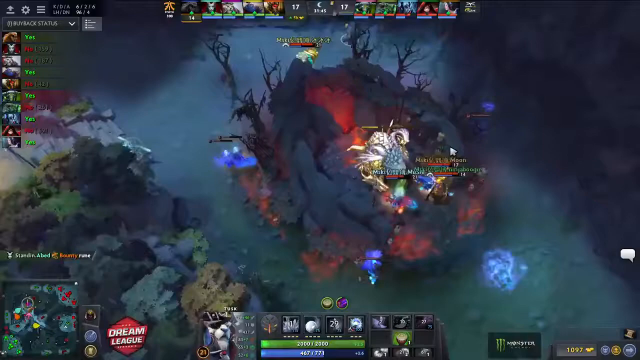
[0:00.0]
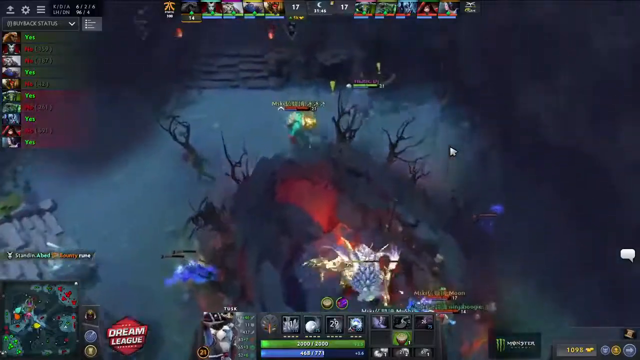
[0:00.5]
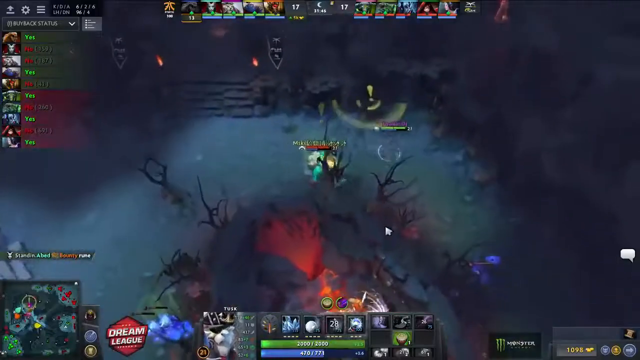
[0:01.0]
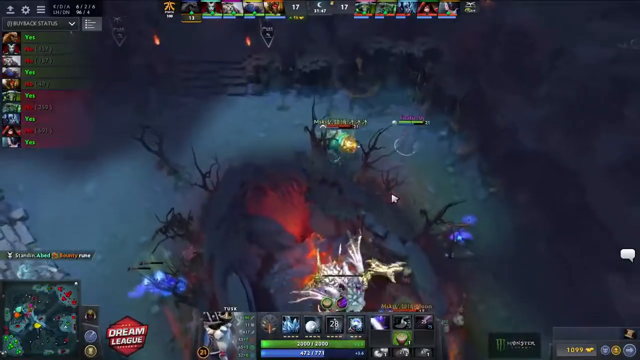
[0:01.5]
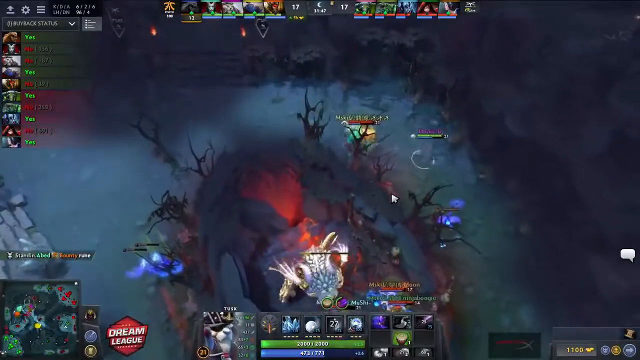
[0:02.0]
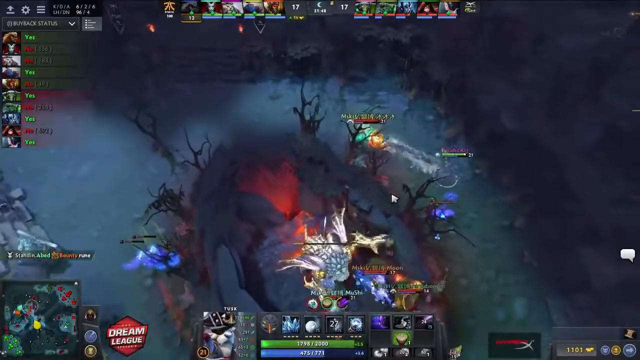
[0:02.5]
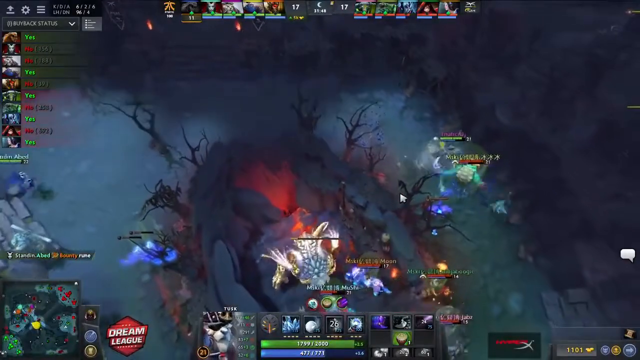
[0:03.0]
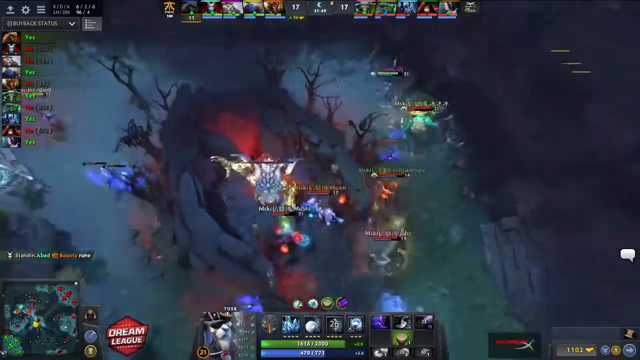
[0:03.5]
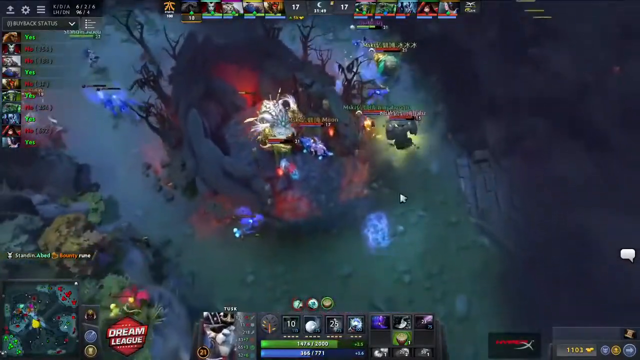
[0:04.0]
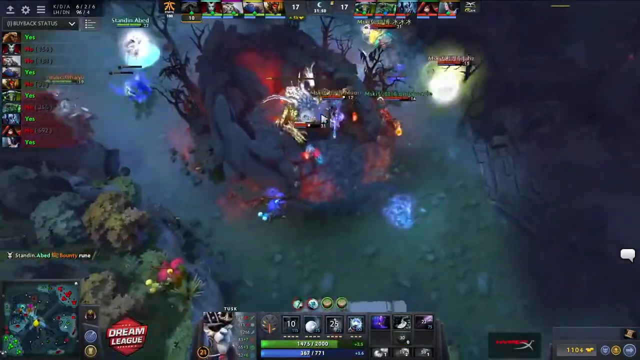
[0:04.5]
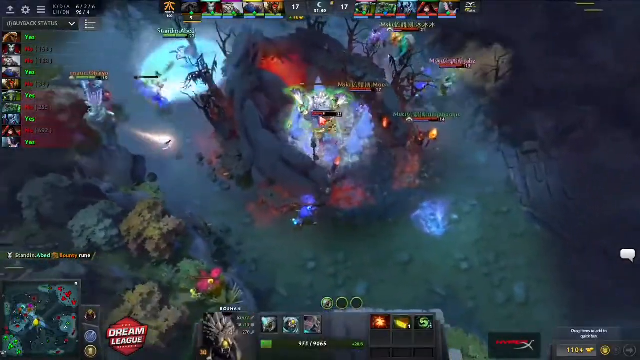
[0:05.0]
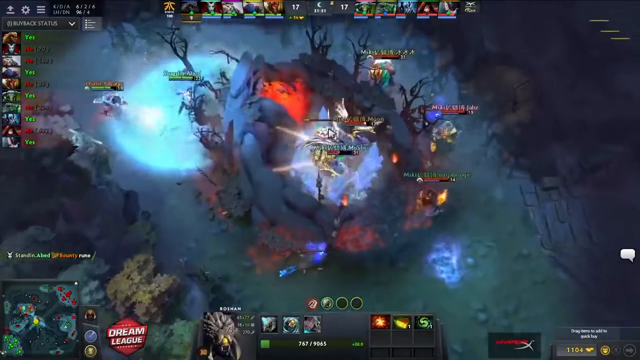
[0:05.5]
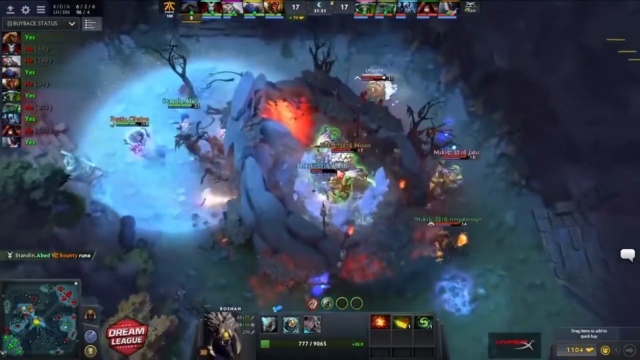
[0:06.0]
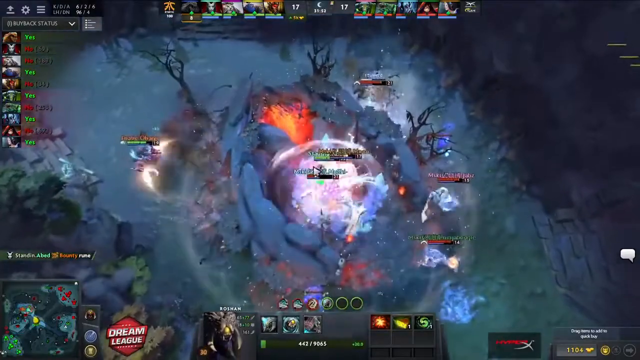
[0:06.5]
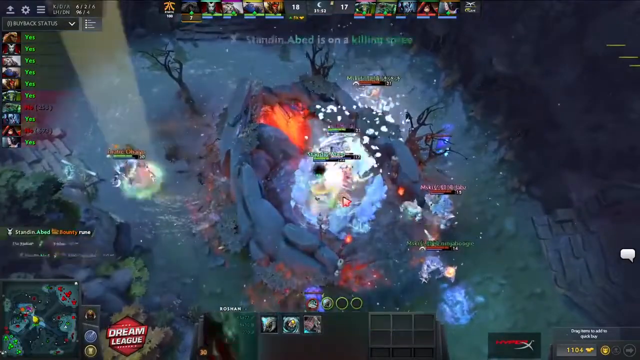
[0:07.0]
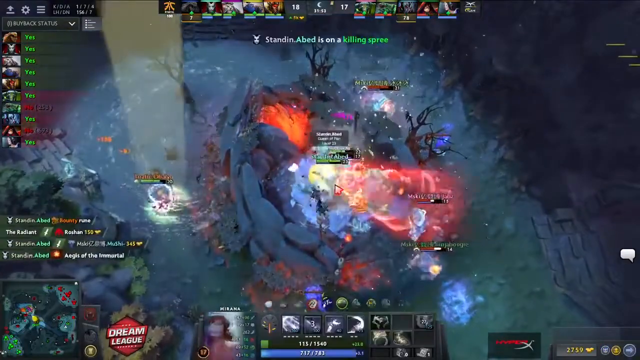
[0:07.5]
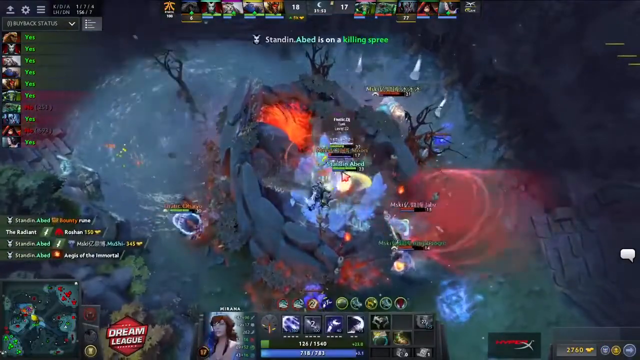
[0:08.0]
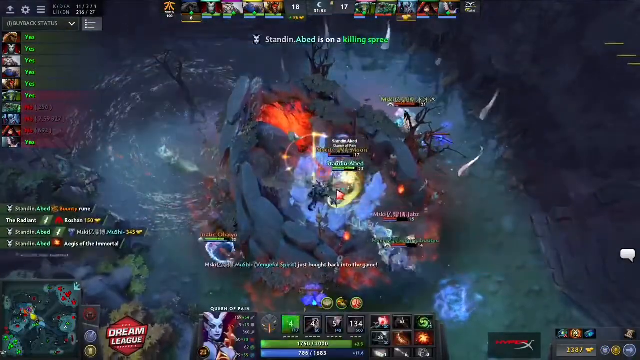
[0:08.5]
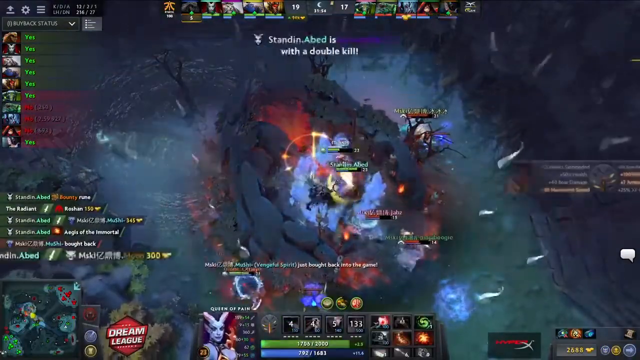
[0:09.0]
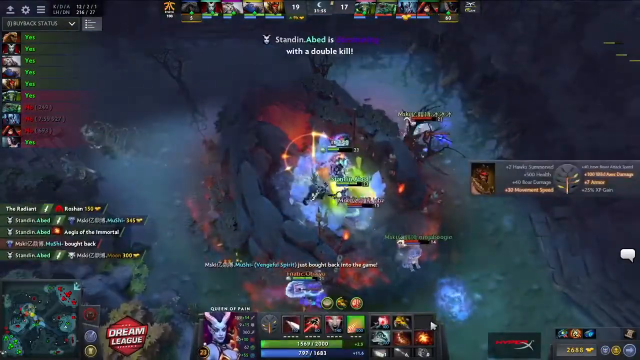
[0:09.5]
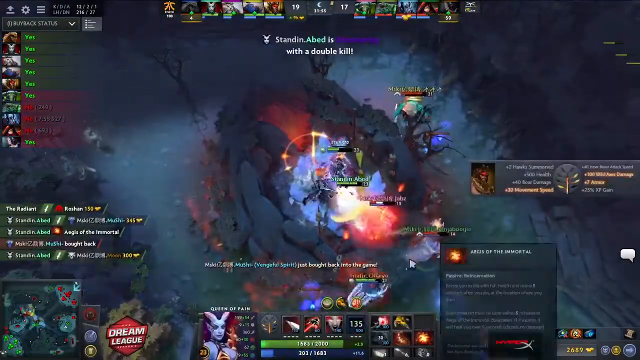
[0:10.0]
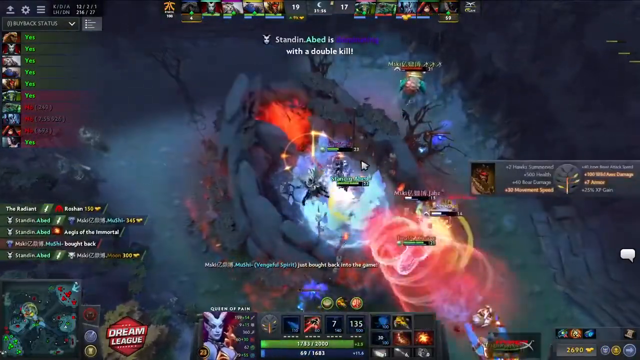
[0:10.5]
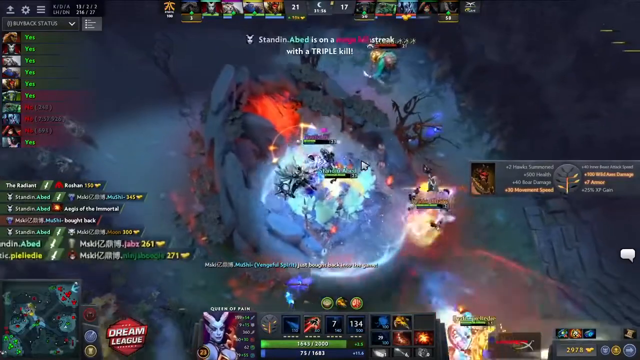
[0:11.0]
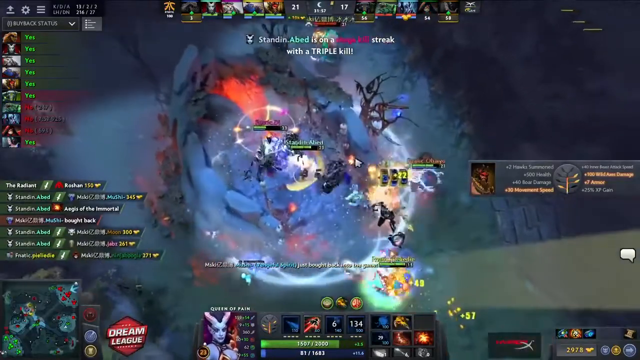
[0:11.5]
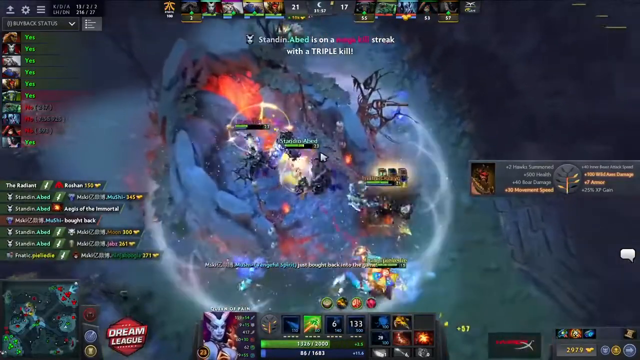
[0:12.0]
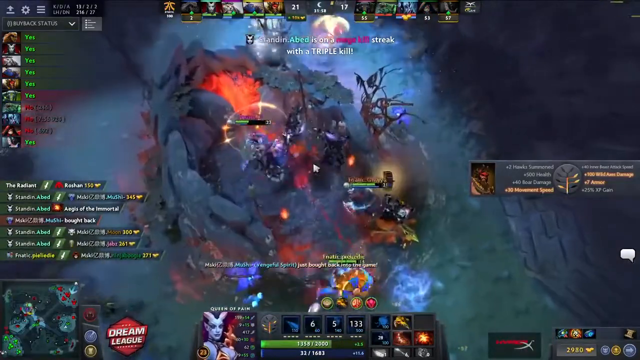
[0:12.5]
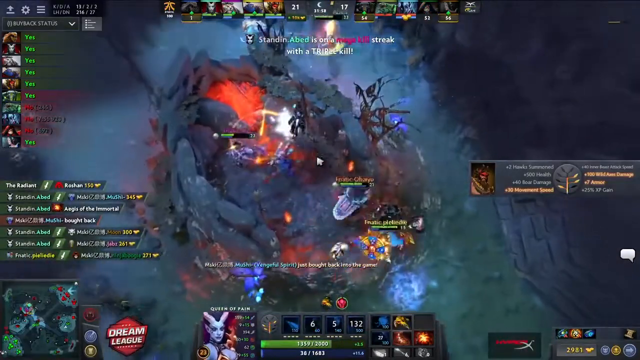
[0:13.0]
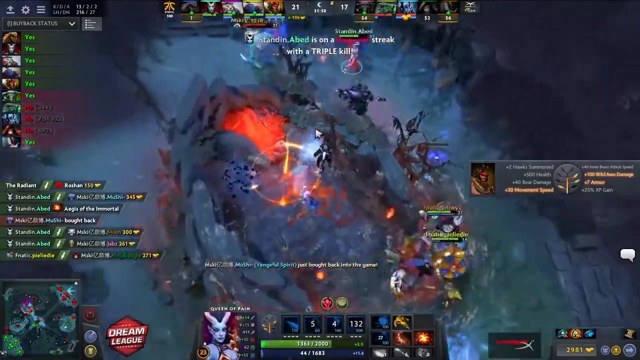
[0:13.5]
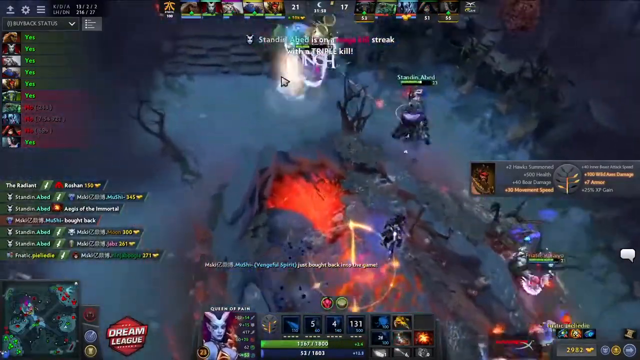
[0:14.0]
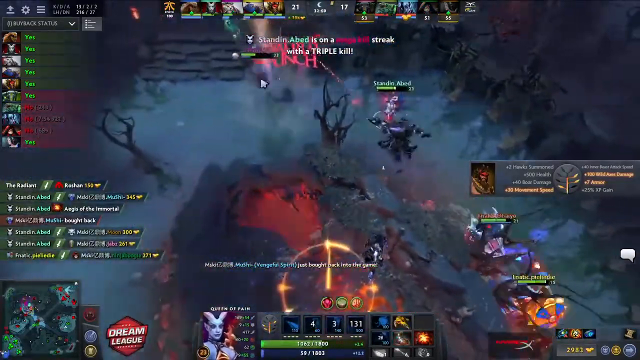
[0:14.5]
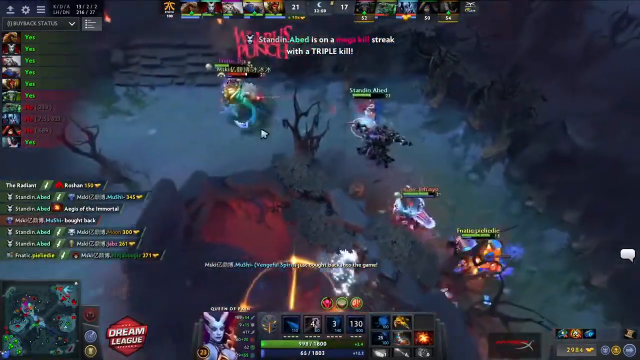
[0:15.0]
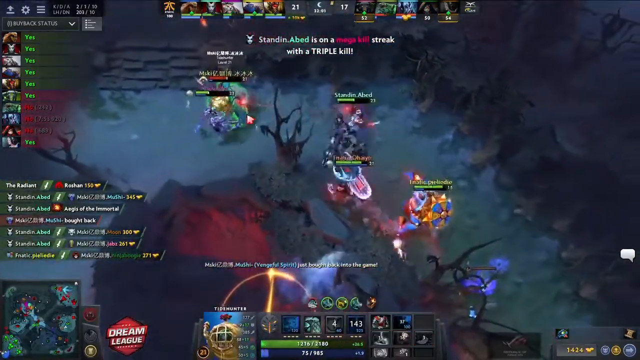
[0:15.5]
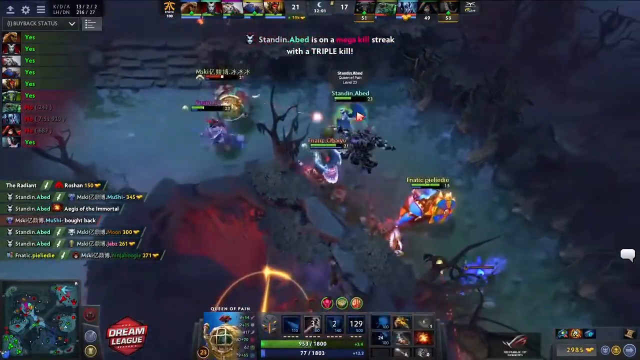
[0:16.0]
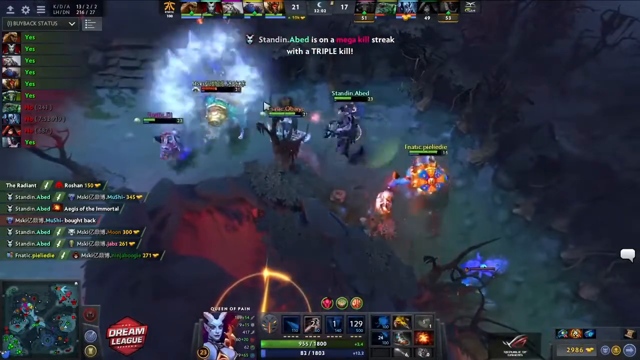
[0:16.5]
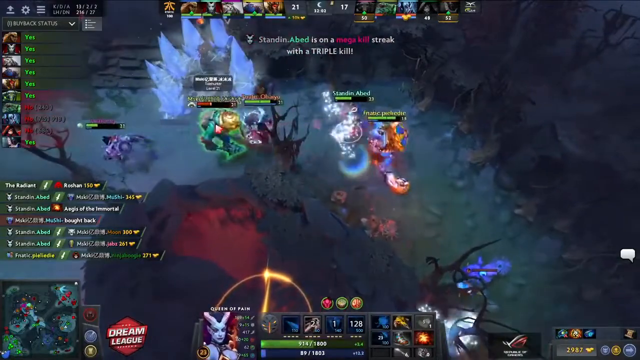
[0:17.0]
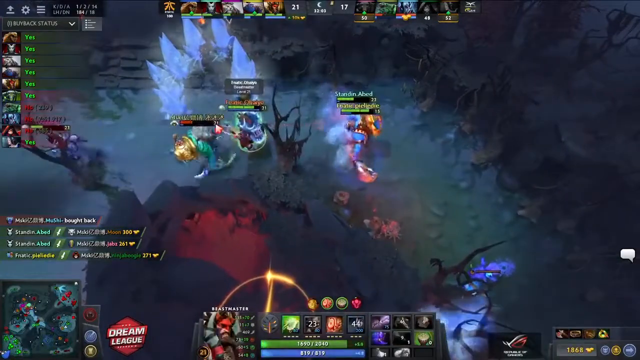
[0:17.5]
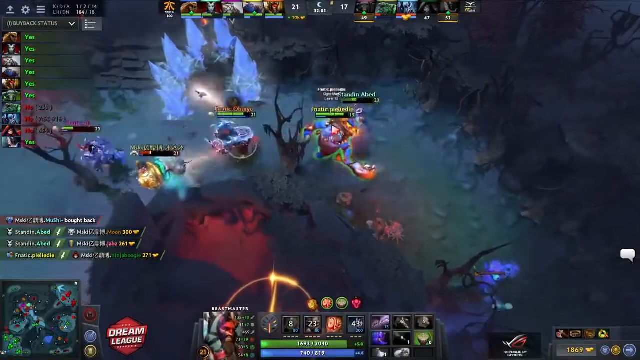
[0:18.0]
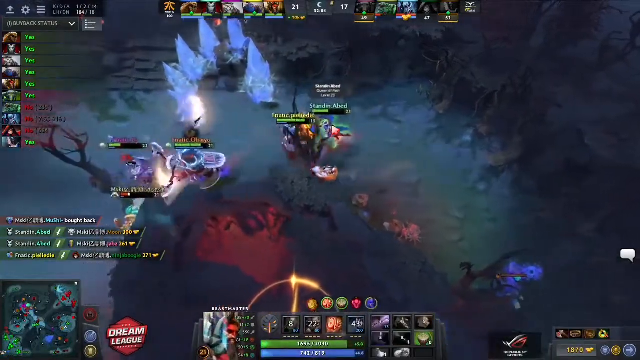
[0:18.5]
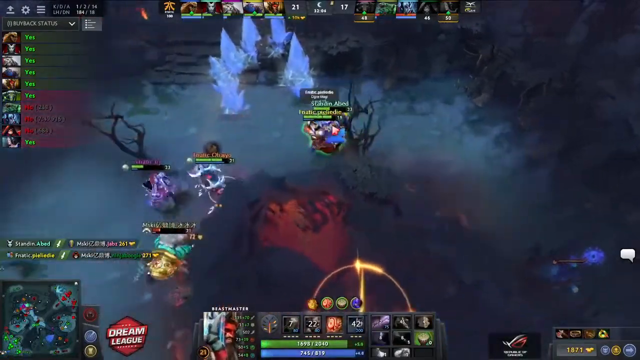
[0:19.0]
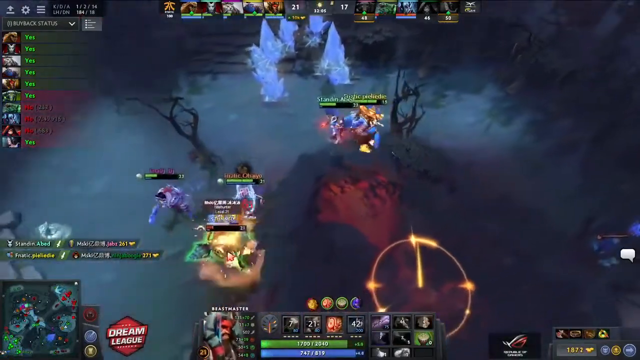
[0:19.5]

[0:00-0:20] Gameplay of a video game is viewed from a top-down angle, looking down on the creatures. There are many people in different colors, and many characters are playing. The left side shows the number of characters; many of them are saying yes, and on the left some are saying no. The characters go into a rocky area and attack one another. Some characters have a green beam on their heads and some have a red beam. Some teleport to others, attacking them and hurting them greatly, and some characters are killed as they are massively destroyed. The bottom left of the screen displays a map where players can locate one another and see how they are doing. The bottom of the screen shows the different abilities the characters can use against other people.